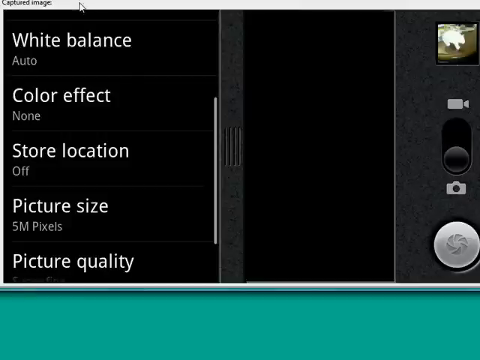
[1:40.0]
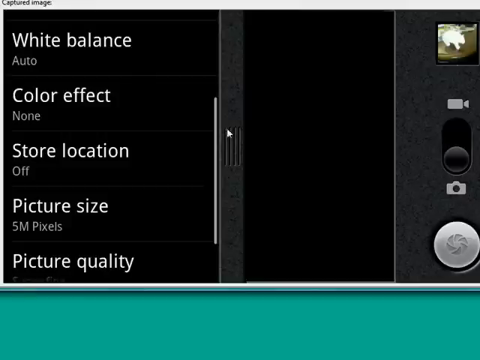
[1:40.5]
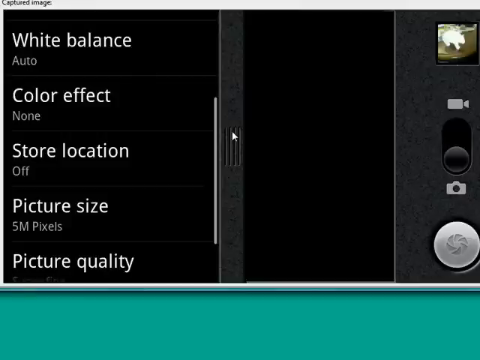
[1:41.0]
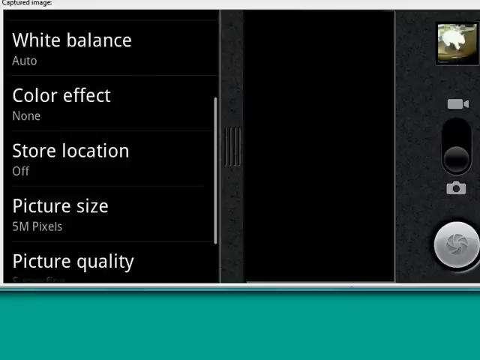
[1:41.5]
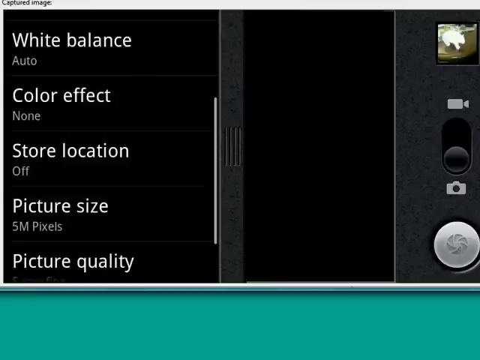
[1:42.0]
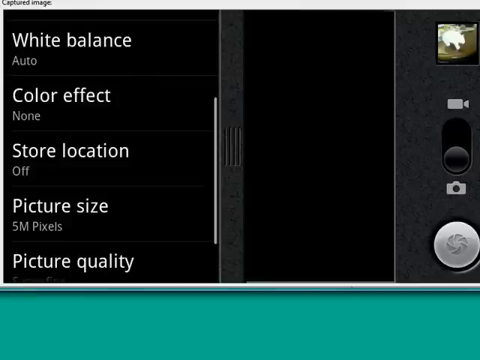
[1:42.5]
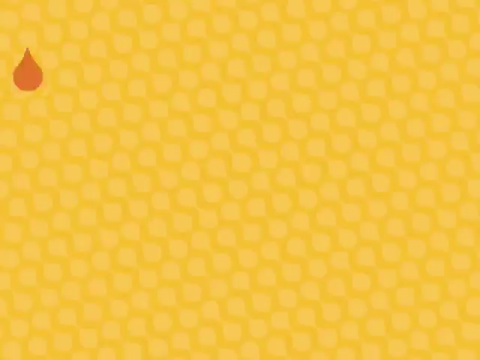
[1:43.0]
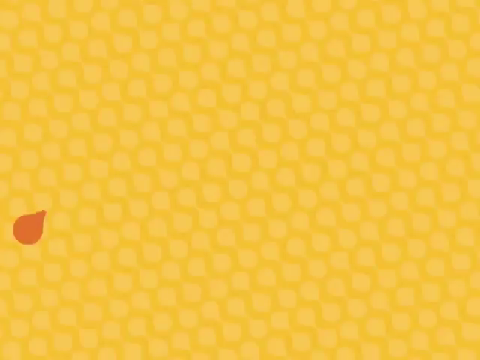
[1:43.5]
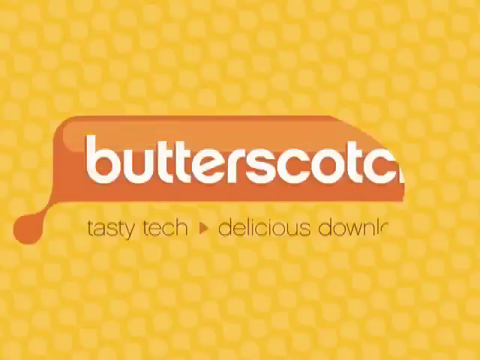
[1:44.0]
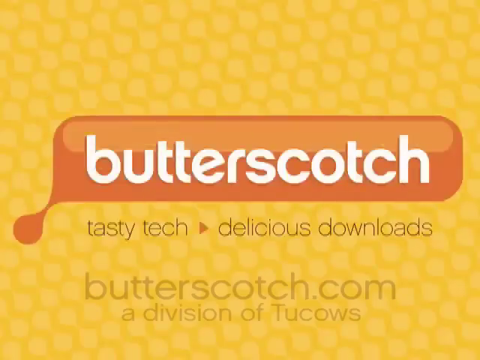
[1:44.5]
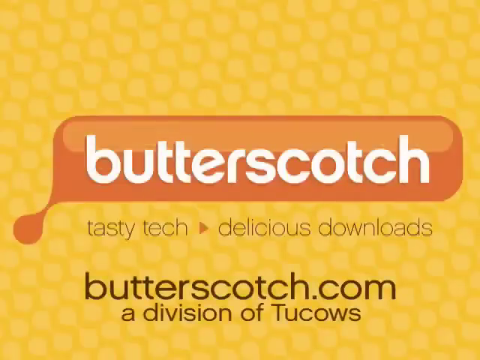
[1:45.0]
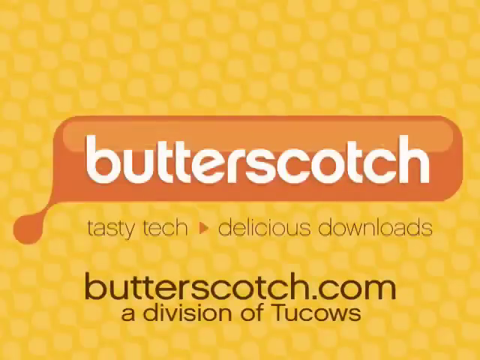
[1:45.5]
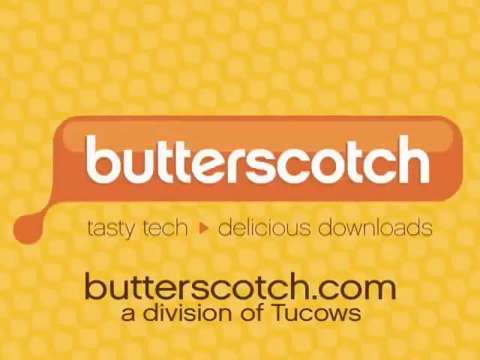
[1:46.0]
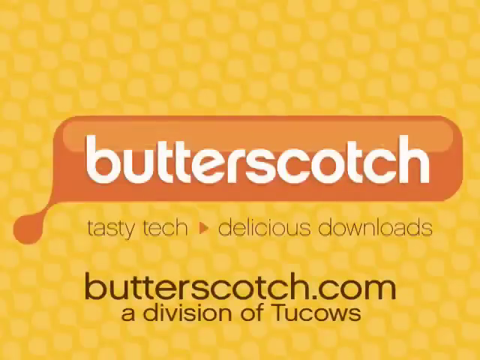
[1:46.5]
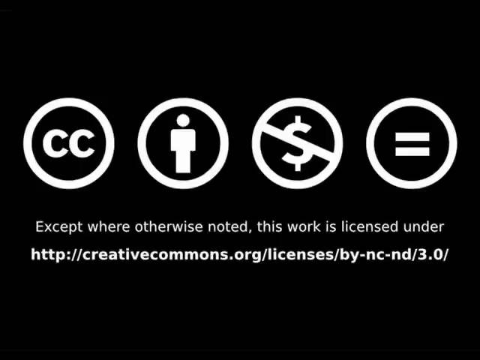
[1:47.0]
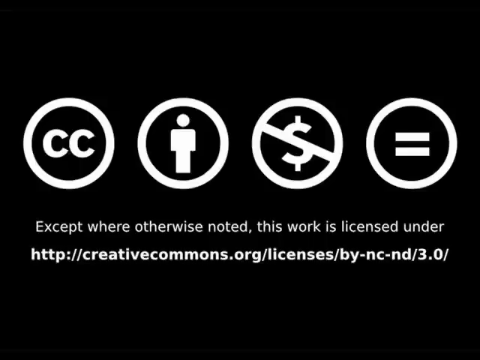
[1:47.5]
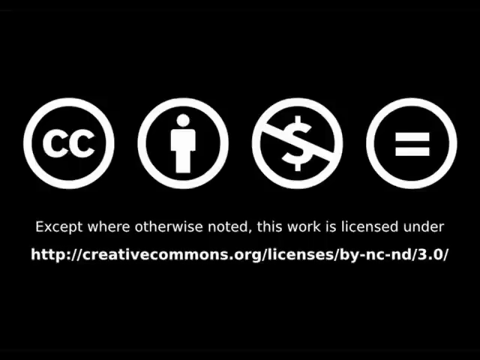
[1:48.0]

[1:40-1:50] The camera's user interface has the option menu expanded on the left side, with the options in white font and their details underneath in gray font. From top to bottom the options are white balance, color effect, store location, picture size, and picture quality, set to auto for white balance, none for color effect, off for store location, and 5m pixels for picture size; the setting for picture quality cannot be seen. An outro transition follows, showing a yellow gold background with a thought bubble icon containing the word "butterscotch" in white font, and underneath this label a detail section reading "tasty tech" with an arrow, then "delicious downloads."